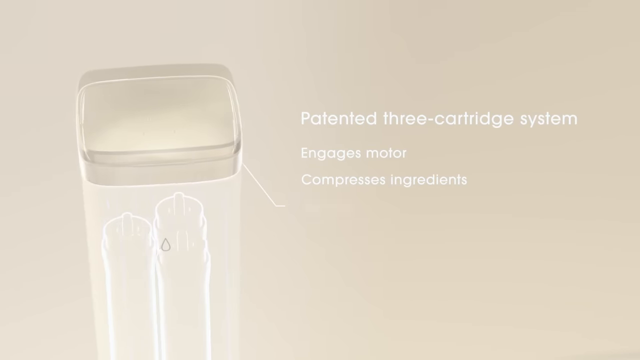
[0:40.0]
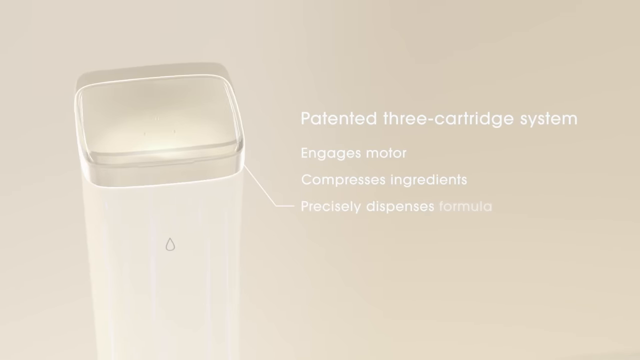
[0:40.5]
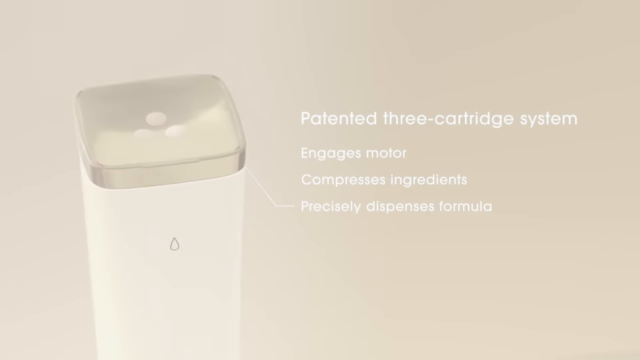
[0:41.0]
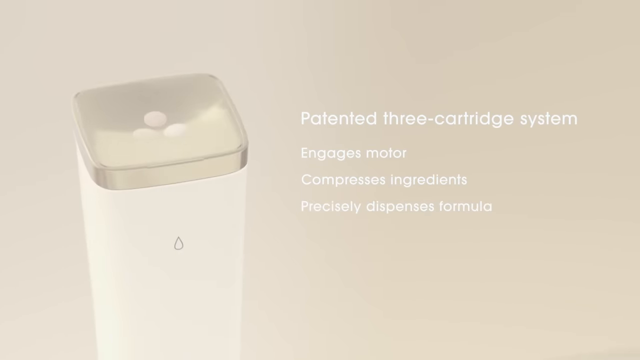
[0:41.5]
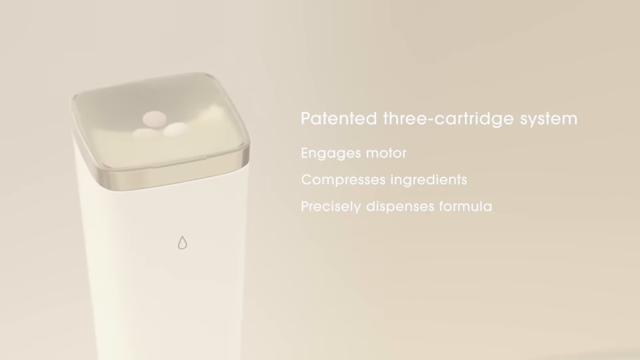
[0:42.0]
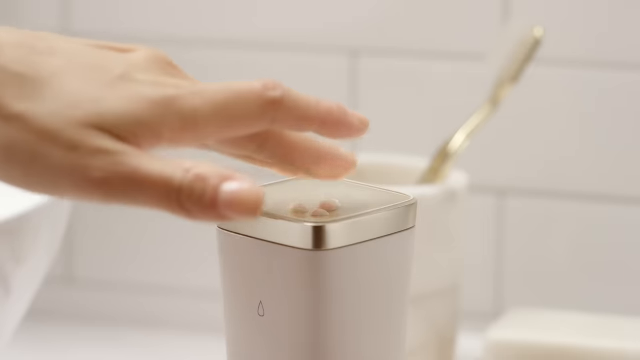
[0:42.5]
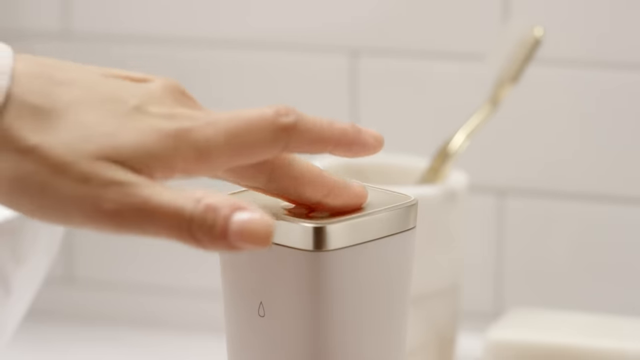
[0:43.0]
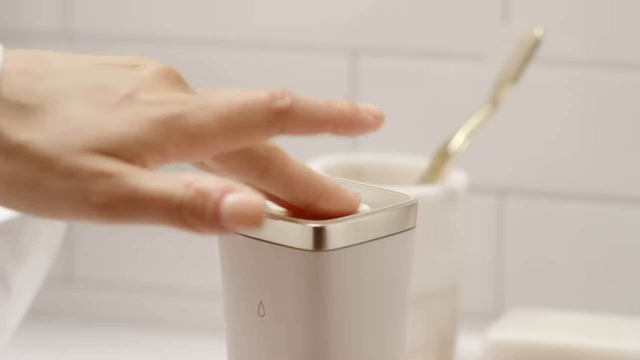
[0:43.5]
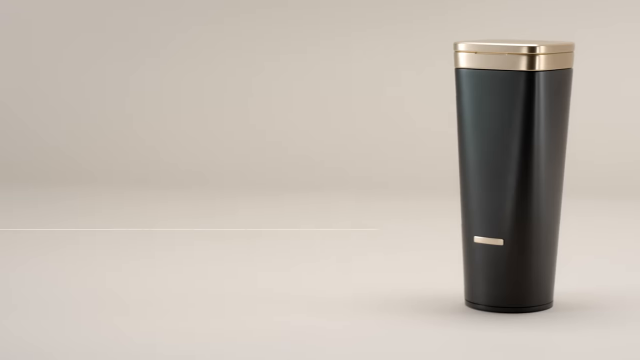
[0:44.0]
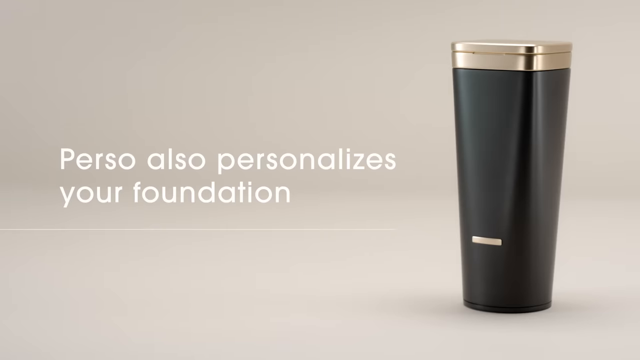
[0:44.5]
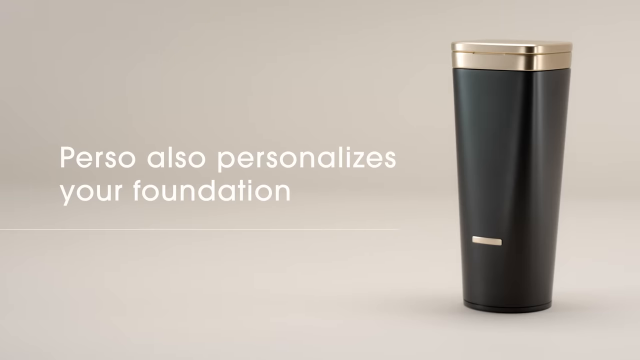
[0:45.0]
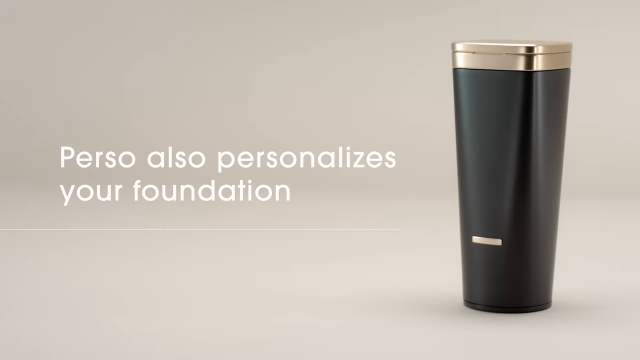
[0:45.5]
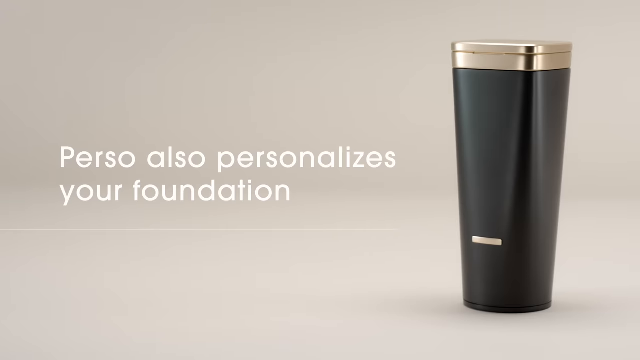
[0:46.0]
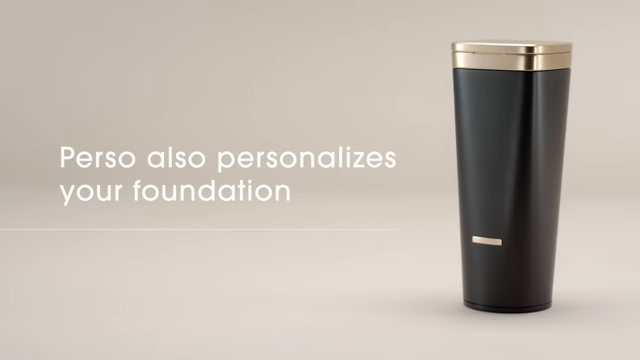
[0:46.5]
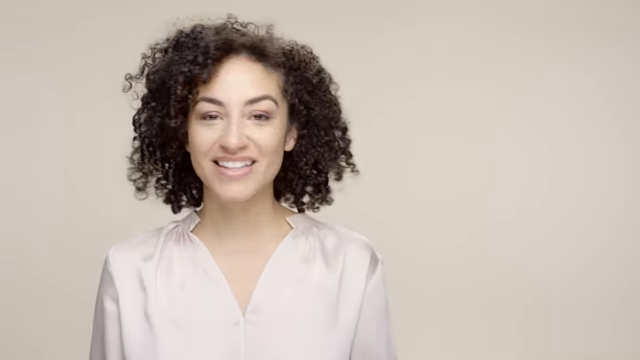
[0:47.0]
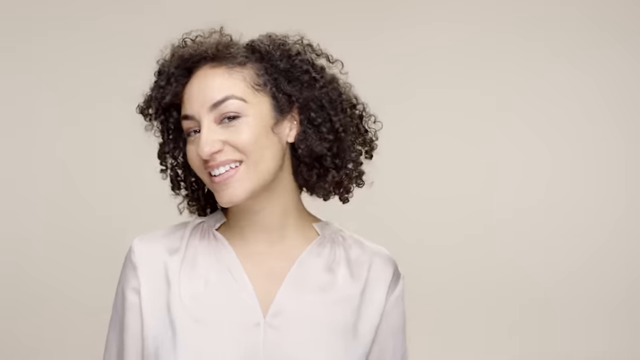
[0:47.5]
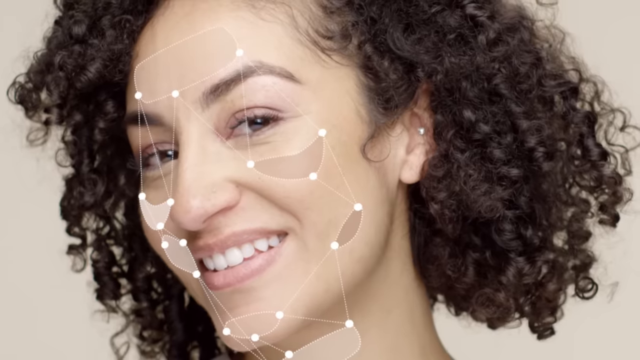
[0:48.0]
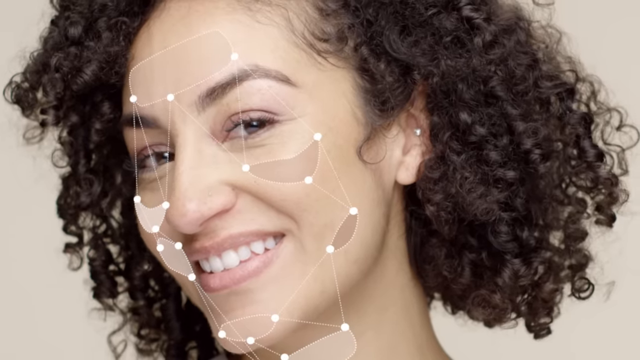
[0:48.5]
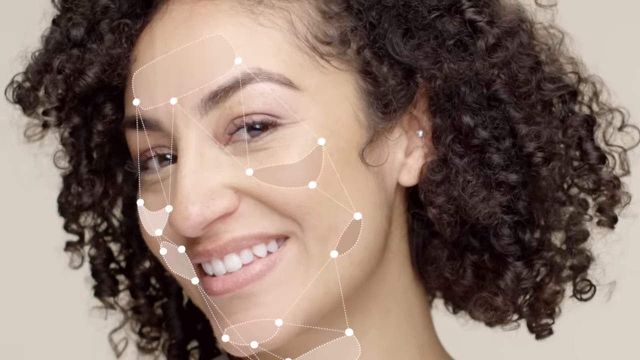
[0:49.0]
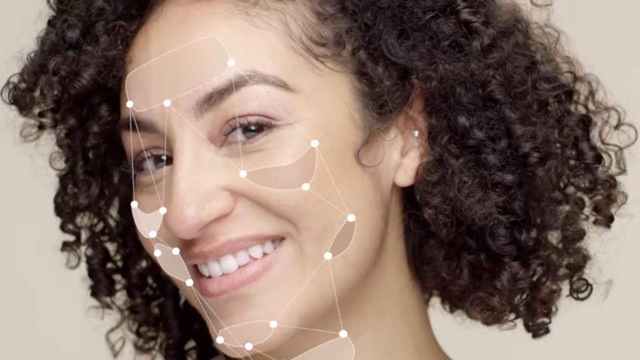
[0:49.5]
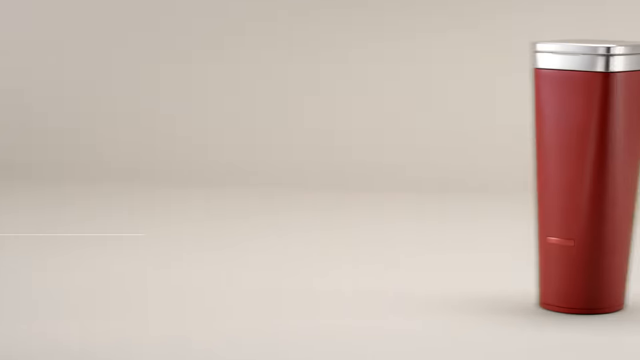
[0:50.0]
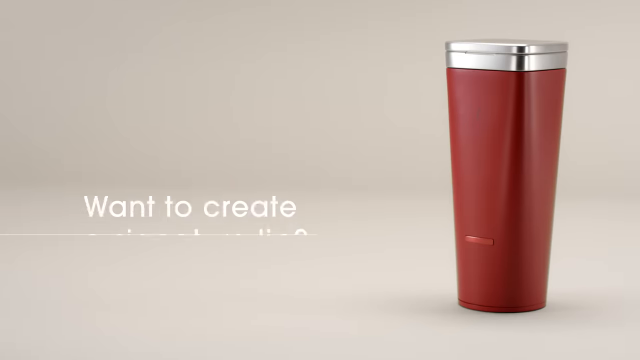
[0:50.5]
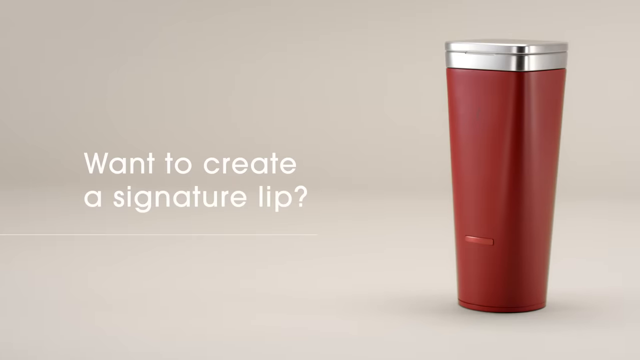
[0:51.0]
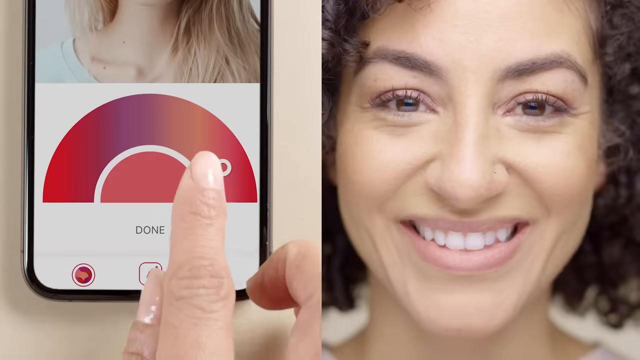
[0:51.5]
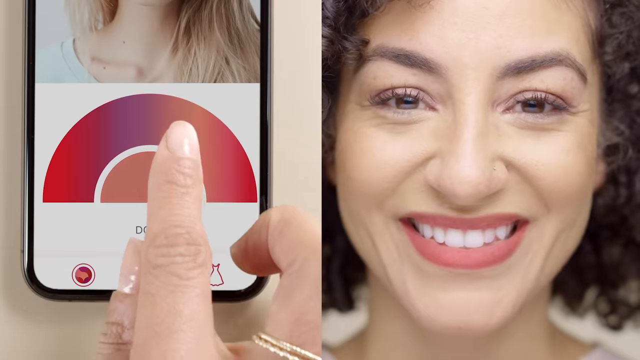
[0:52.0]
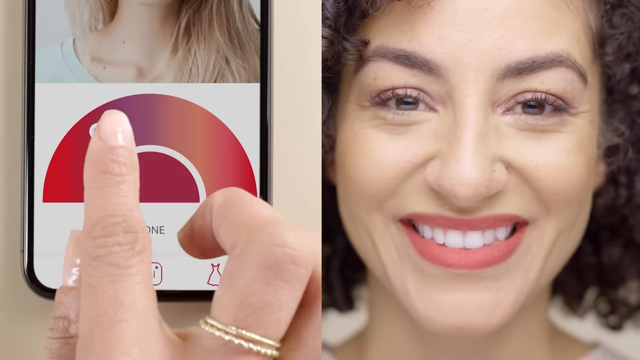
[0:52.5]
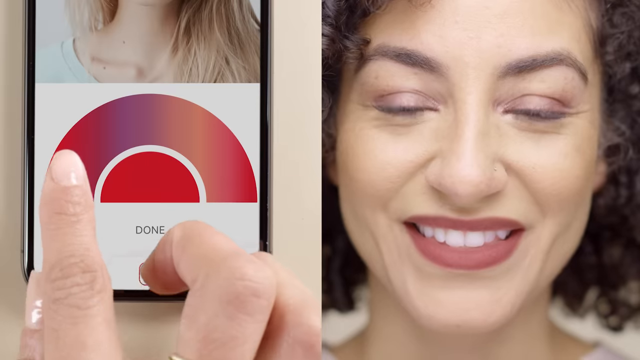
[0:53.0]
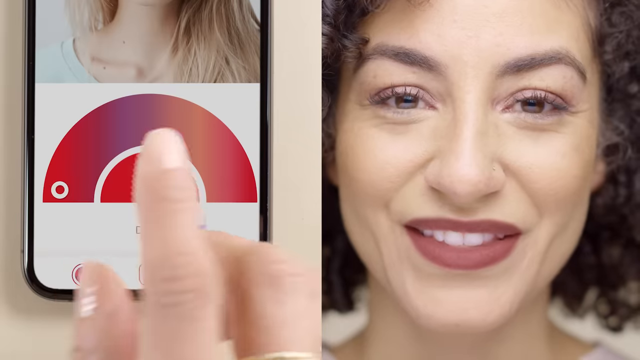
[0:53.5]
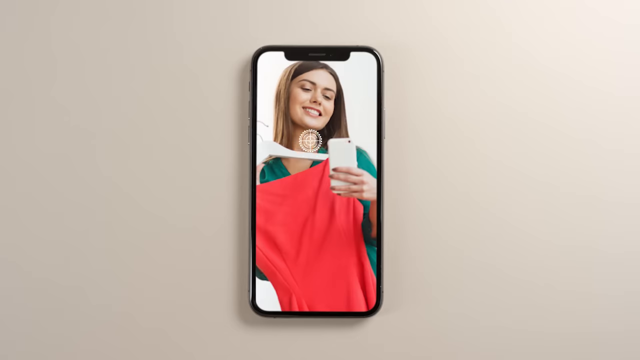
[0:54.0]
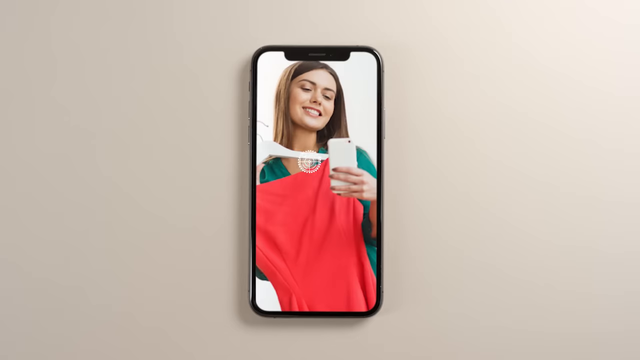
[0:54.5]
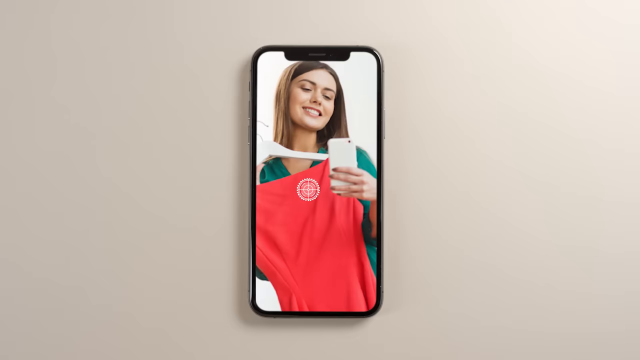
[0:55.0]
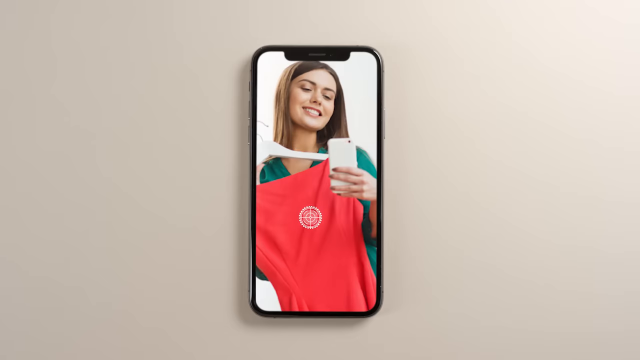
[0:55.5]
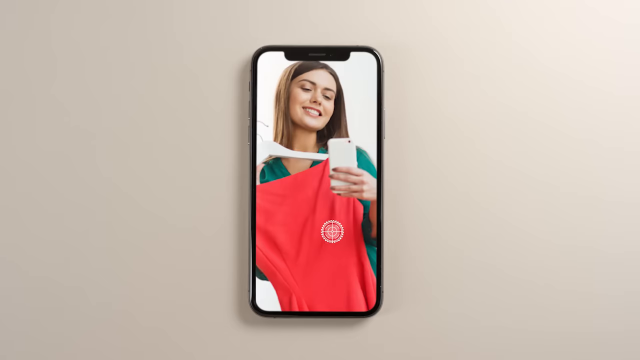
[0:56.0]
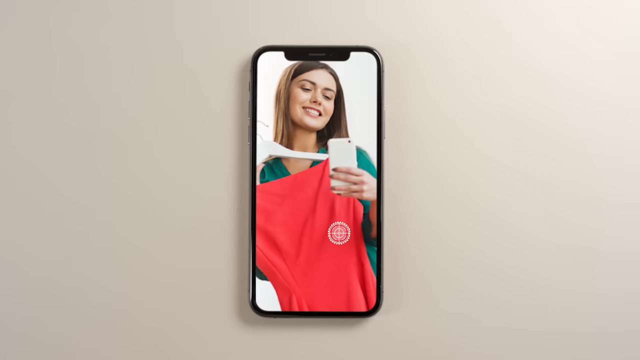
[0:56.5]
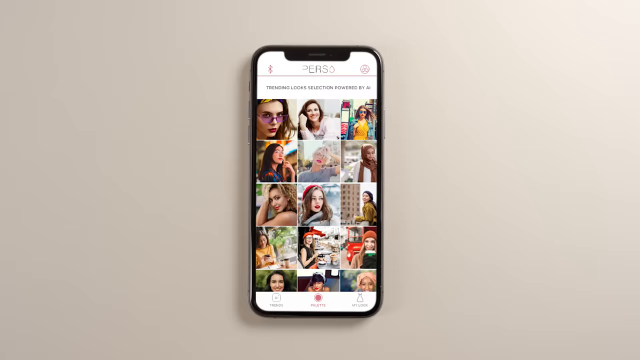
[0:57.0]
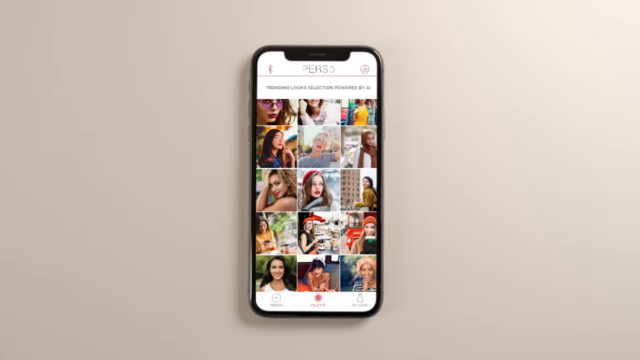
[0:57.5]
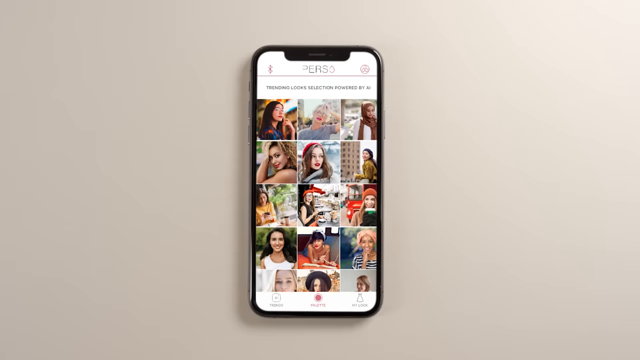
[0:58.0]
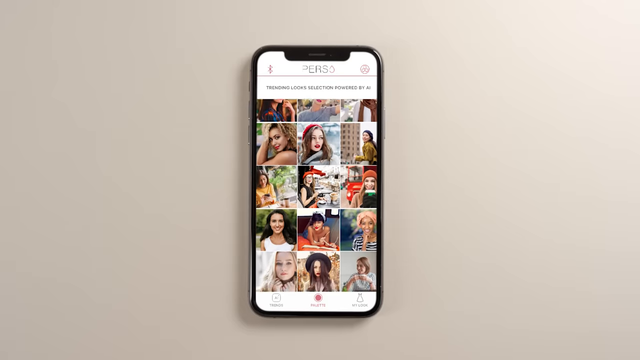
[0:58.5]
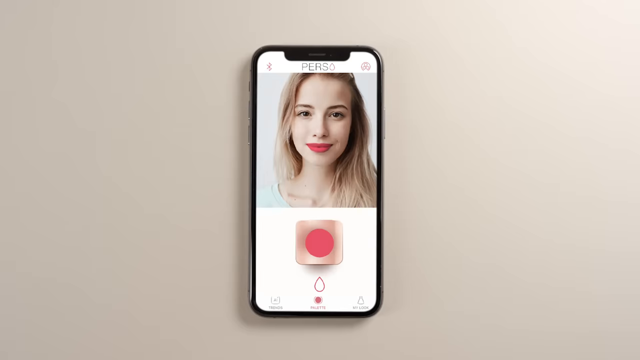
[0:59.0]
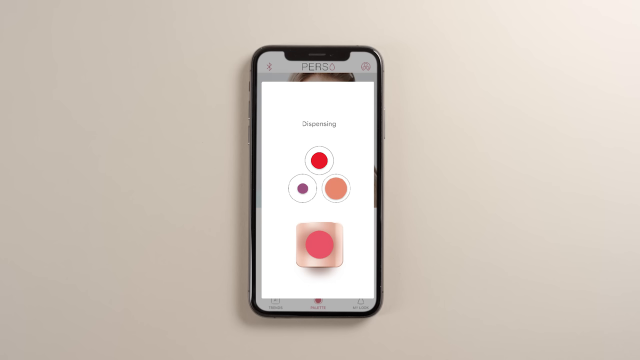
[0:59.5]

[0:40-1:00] The product is on the left-hand side, with information on the right about the patented three-part system, which engages the motor, compresses ingredients and precisely dispenses the required formula, shown in a graphic. A close-up follows of the lady's left hand touching the top of the product after it has dispensed what looks like some kind of foundation or skincare product; she gently rubs her fingers around it so that some is on her finger. The scene transitions to the product on the right-hand side, this time black with a gold top, and text pops up reading "Perso also personalises your foundation". The lady tilts her head, and a close-up of her with her head tilted shows a graphic on her face pinpointing areas on her forehead, under her eyes, her cheekbones, her chin and around her neck, apparently the areas where the product is to be applied. She is smiling. Another picture of the product follows, this time red, apparently the lipstick product, with text reading "want to create a signature lip". A split screen follows; on the right-hand side is an image of the lady with lipstick, and as she scrolls, the colour of her lips changes. Next, a mobile phone screen shows an image of a lady holding a dress, with a target moving around it; this appears to be where a colour can be chosen for the product to make or match.